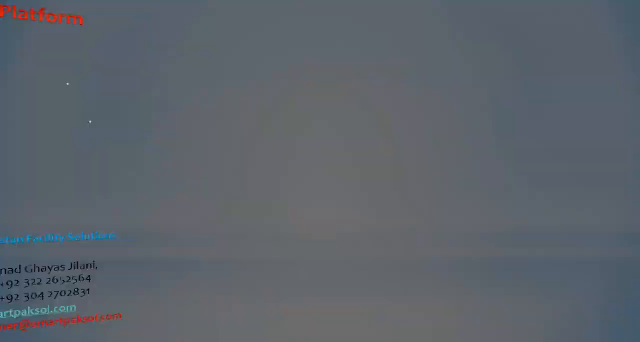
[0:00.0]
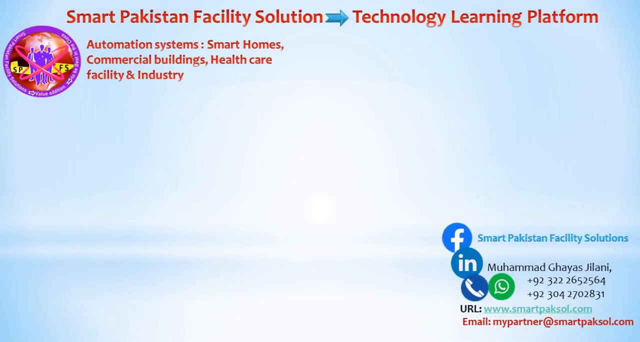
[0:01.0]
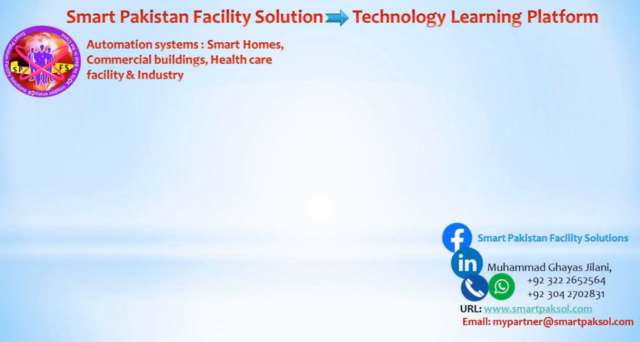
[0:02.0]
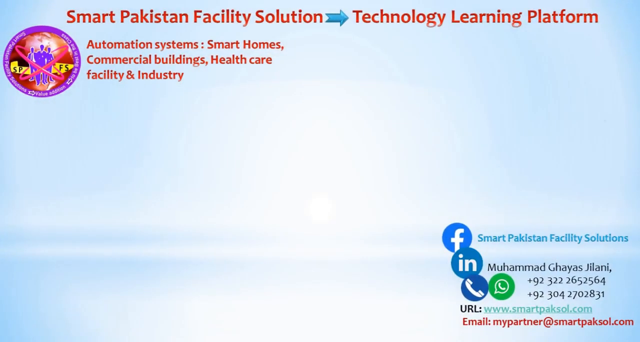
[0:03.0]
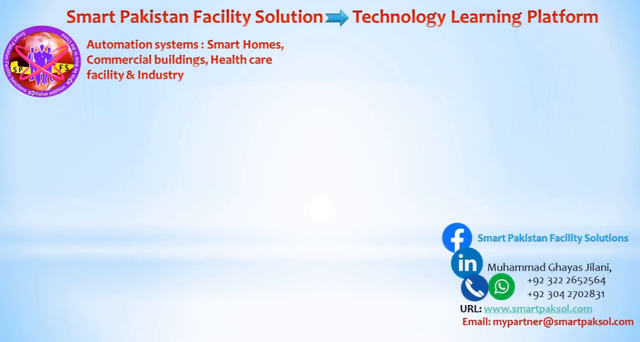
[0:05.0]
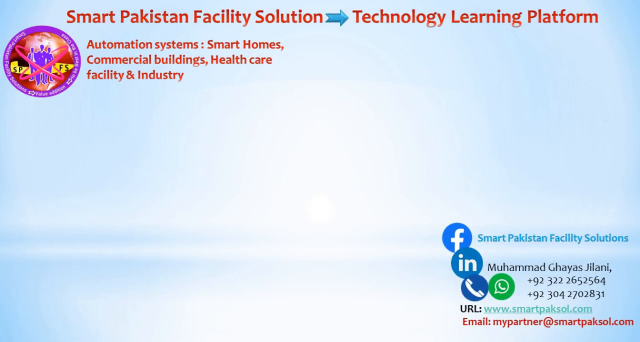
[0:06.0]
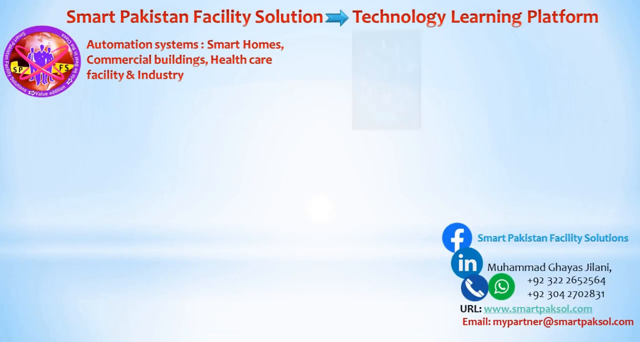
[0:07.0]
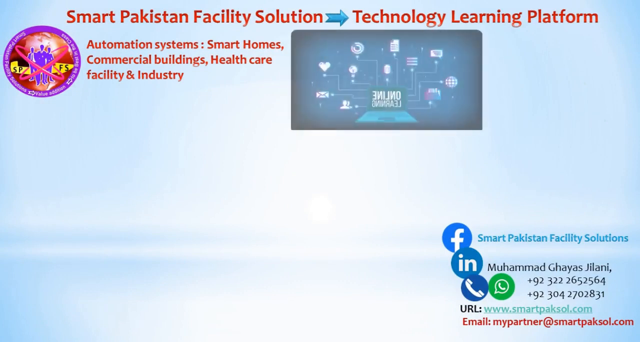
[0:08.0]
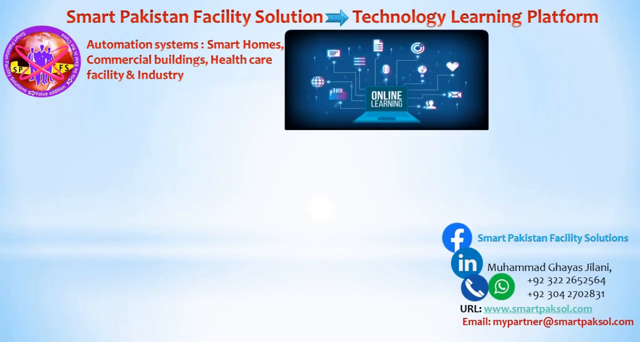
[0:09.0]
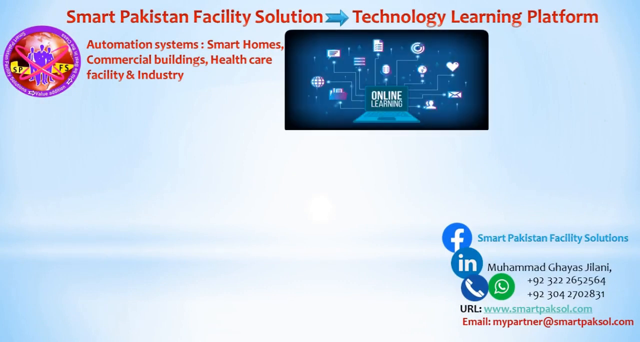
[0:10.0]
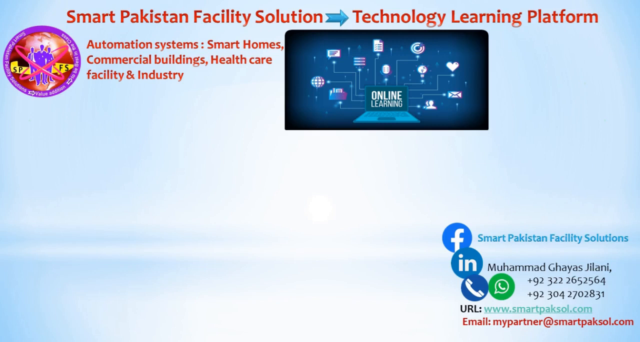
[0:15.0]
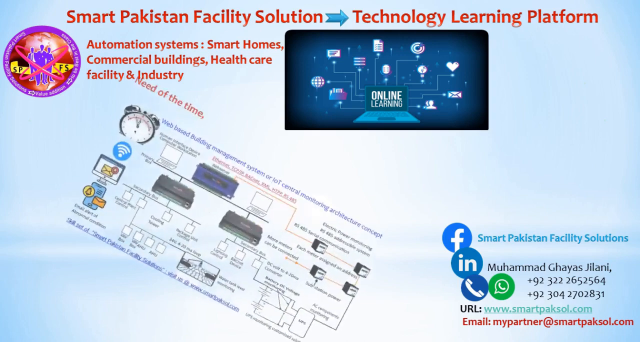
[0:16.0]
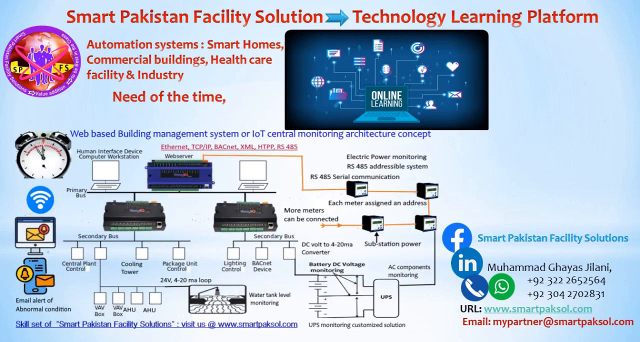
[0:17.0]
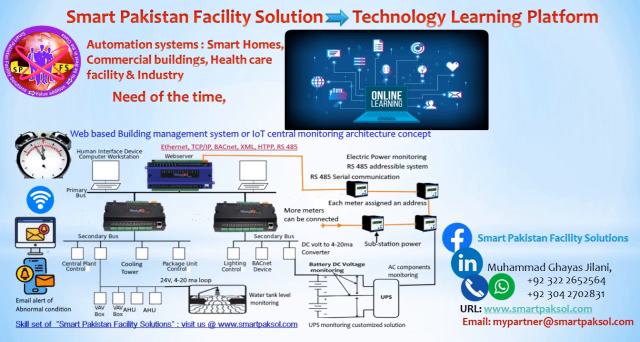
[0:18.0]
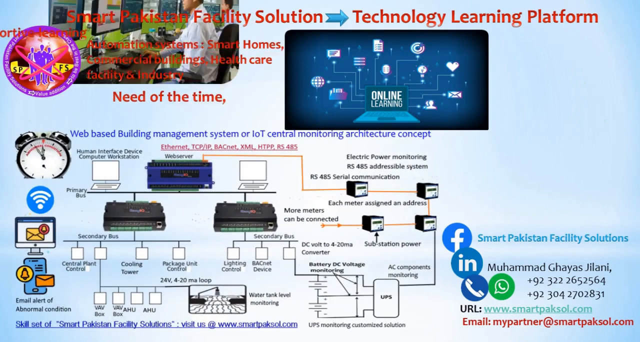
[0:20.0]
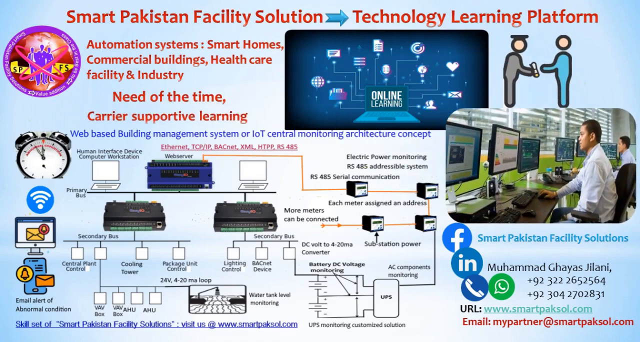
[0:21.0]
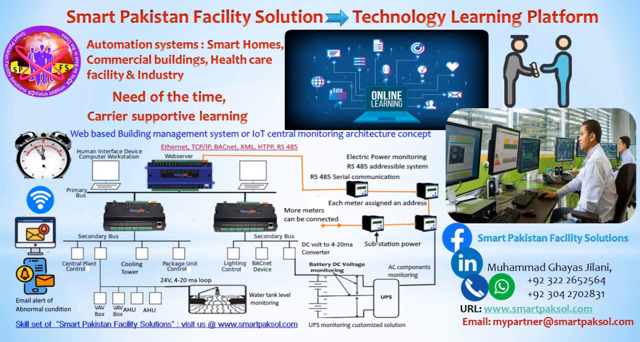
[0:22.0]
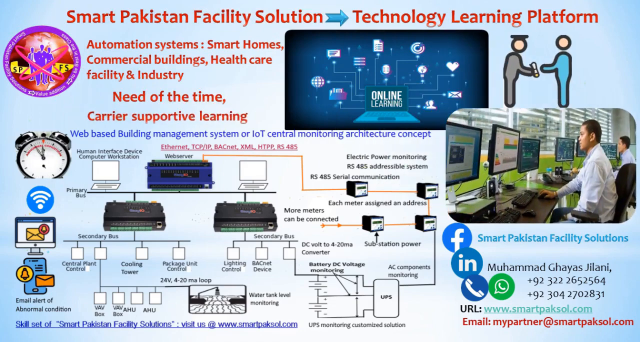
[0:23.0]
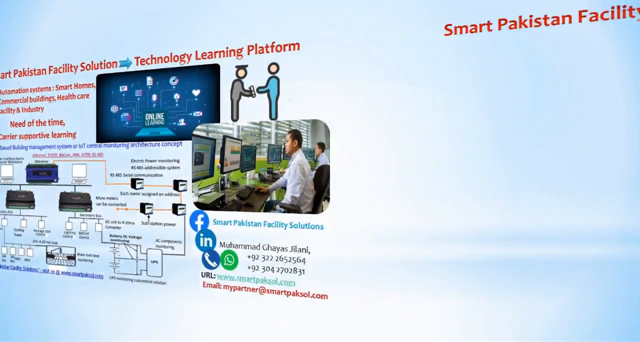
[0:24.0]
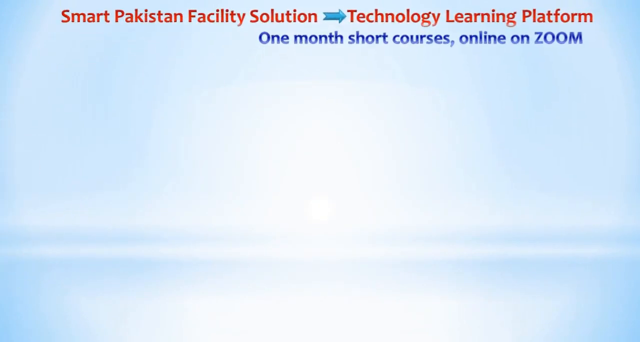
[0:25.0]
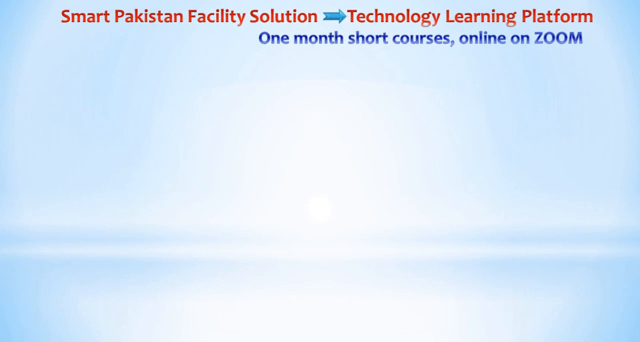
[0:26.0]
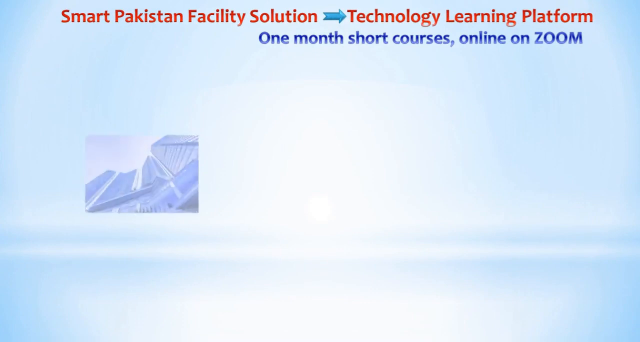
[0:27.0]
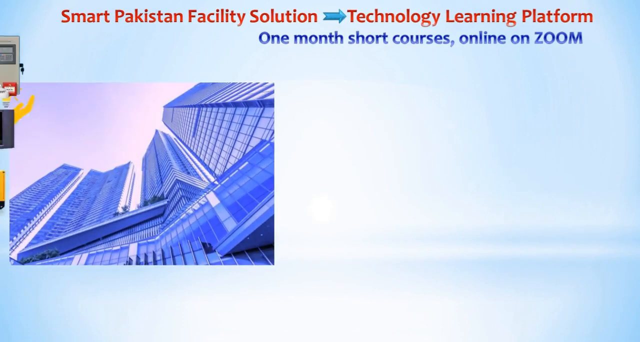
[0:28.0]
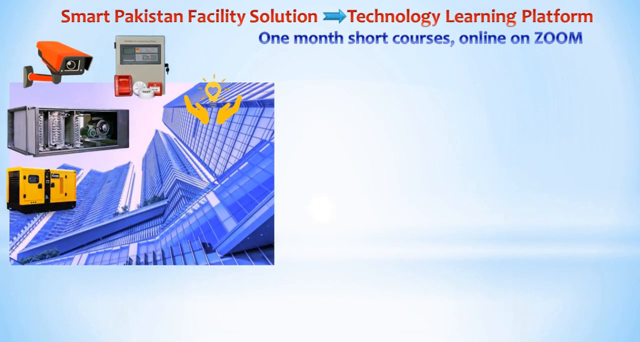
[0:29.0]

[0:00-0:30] What seems to be a presentation from a company called Smart Pakistan Facility Solutions opens on a front page stating that the company works on automation systems such as smart homes, commercial buildings, and healthcare facilities and industries. On the bottom right of the screen is contact information for the webpage and the individuals linked to the company: a Facebook link, a LinkedIn name, a phone number and a WhatsApp phone number, as well as a website URL and an email. A logo for the company is on the top left of the screen. An animation then brings up two different images. The top one seems to be a stock image of a computer that says "online learning", with different icons connected to it, such as a heart, different papers, and a globe. The bottom left image contains a flowchart labeled "web-based building management system or ioT, central monitoring architecture concept".